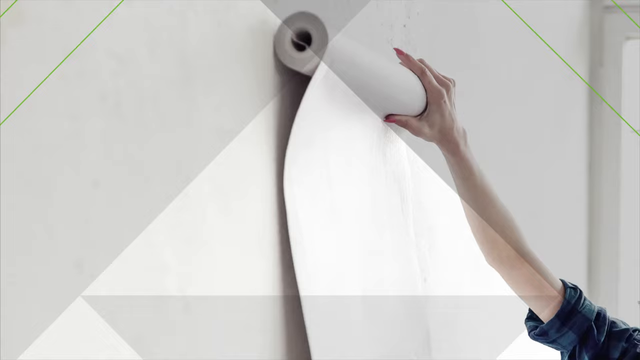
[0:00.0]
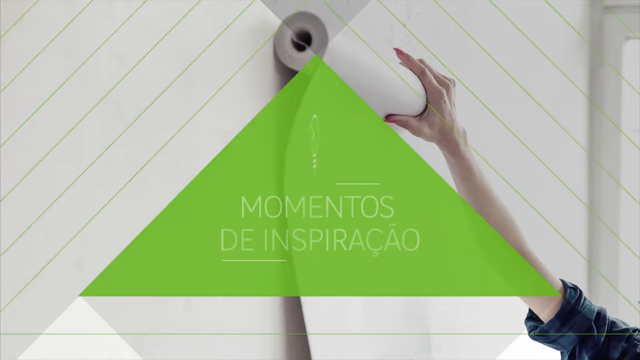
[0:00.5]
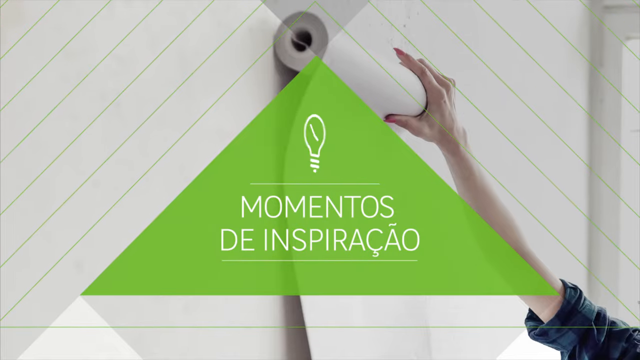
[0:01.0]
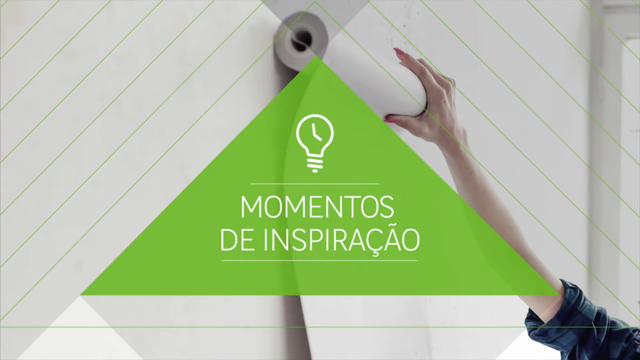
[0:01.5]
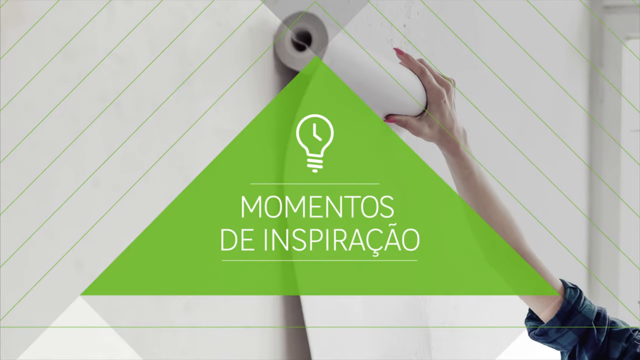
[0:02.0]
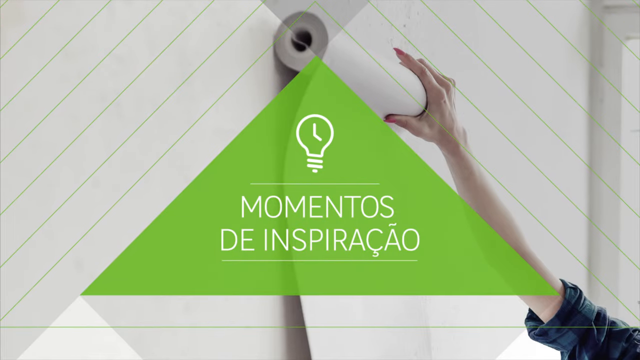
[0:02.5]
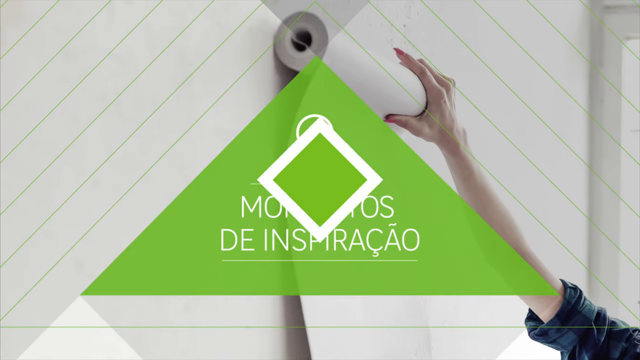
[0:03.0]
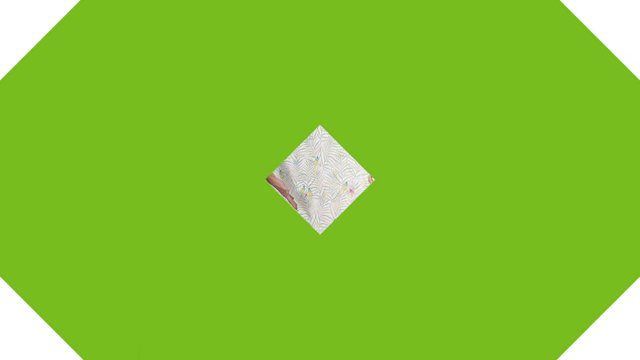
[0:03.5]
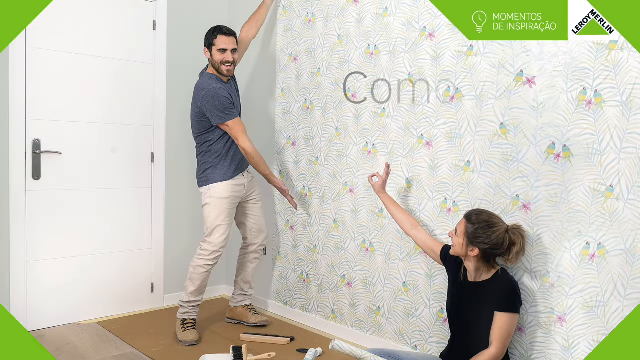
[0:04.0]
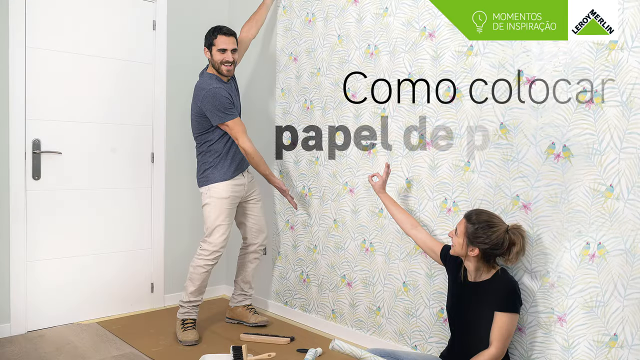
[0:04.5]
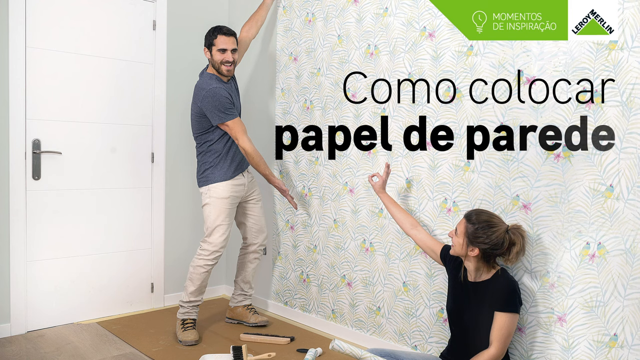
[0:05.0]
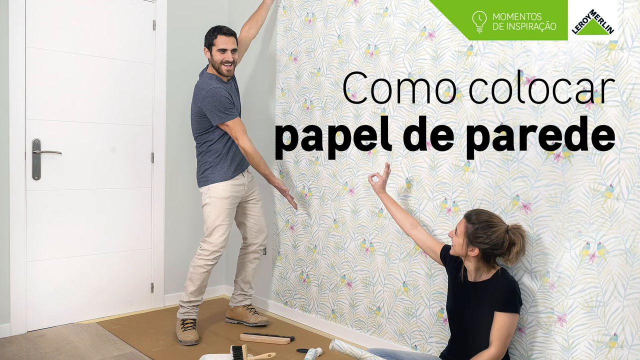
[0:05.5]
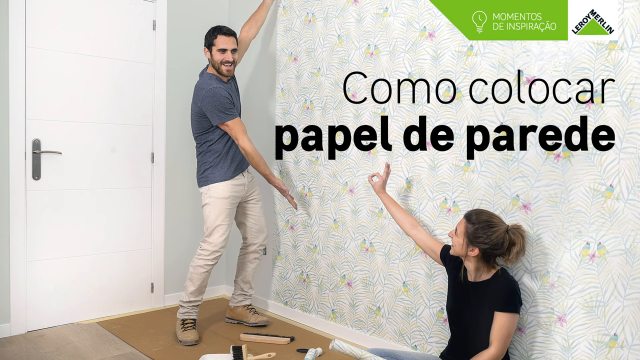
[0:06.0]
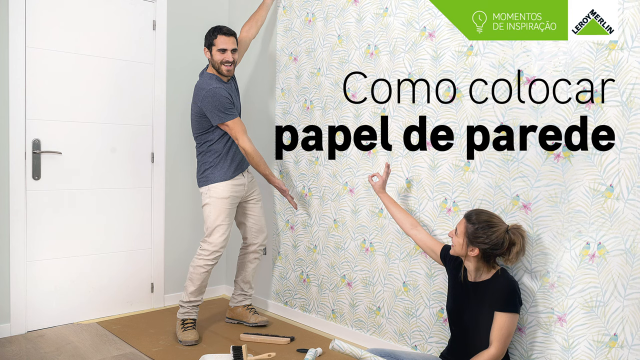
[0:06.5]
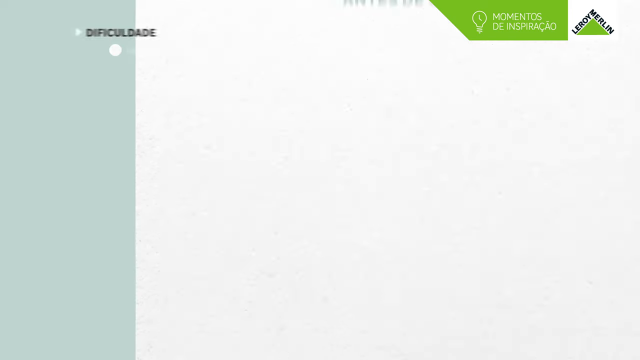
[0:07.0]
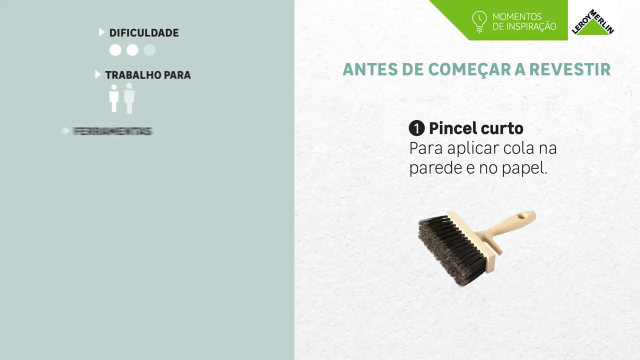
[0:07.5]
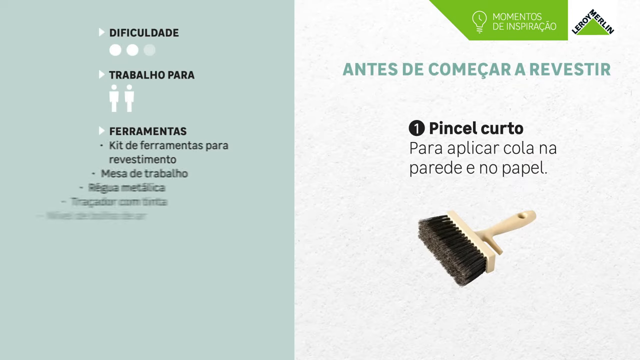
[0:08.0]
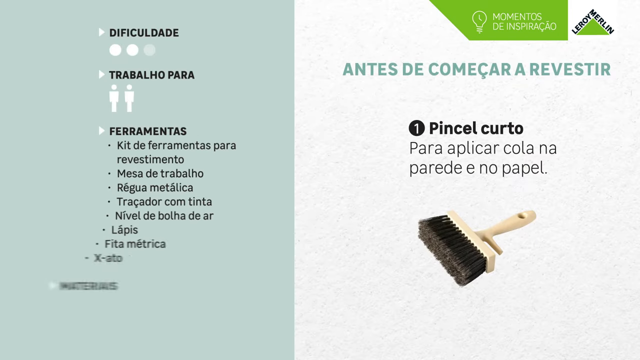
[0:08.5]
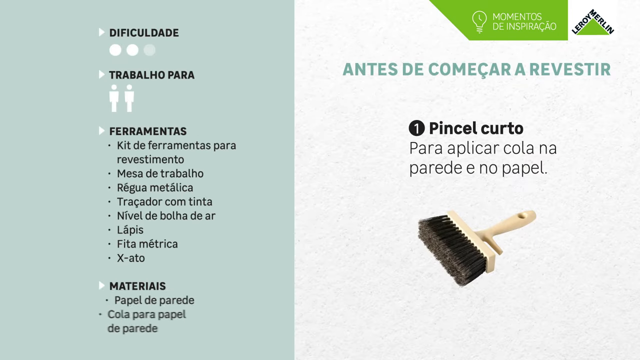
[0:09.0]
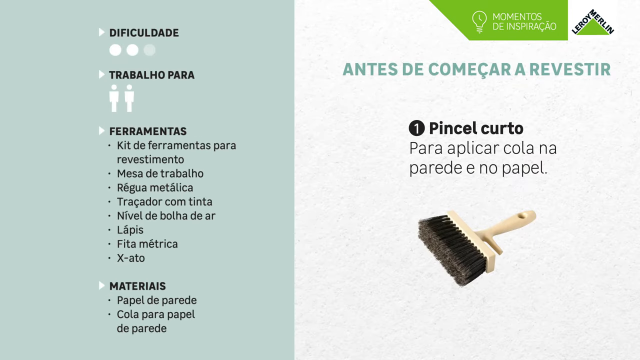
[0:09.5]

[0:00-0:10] The video appears to be in Spanish and is probably a do-it-yourself home improvement video about adding wallpaper. The text "Leroy Merlin" and the company logo appear in the top right corner. There seems to be a couple in the video, giving the impression that they have moved in together into a new home or apartment and are adding wallpaper to the walls. Spanish text lists what to use, and some sort of brush, a hardware brush, is shown as one of the supplies. A roll of wallpaper is presented, attached to the wall, and someone holds it and pins it to the wall, about to apply it.